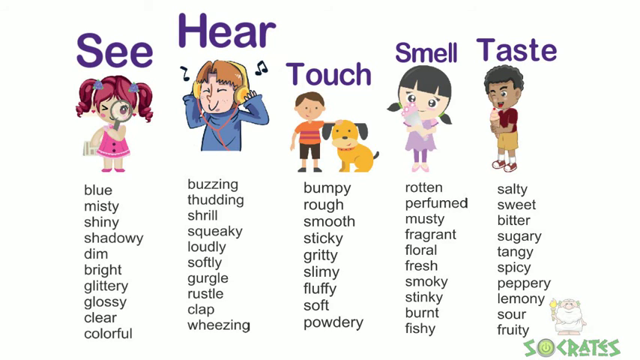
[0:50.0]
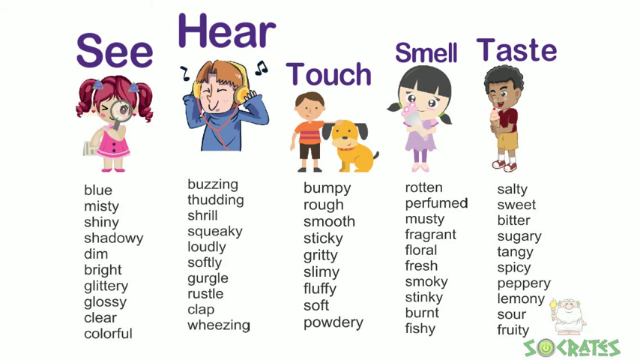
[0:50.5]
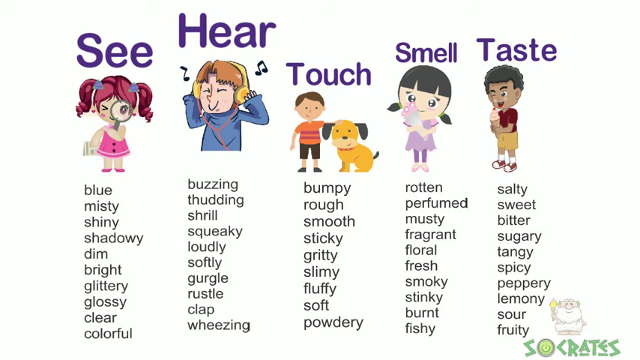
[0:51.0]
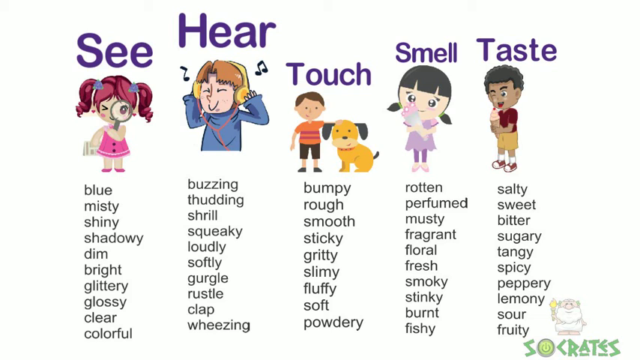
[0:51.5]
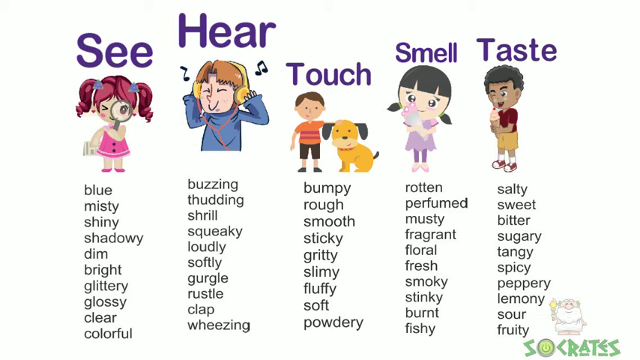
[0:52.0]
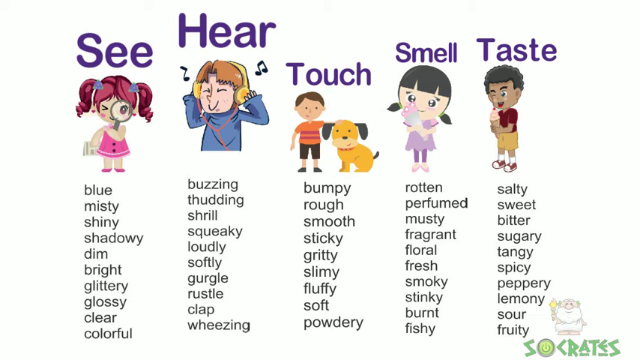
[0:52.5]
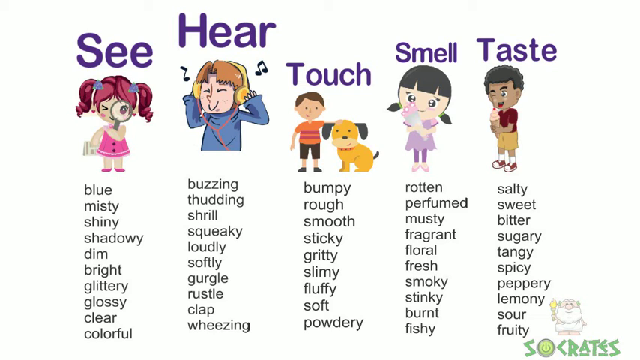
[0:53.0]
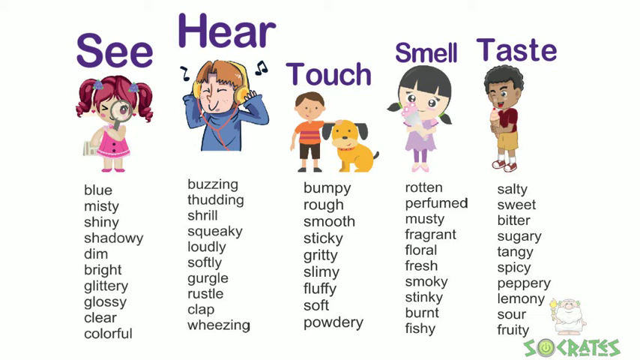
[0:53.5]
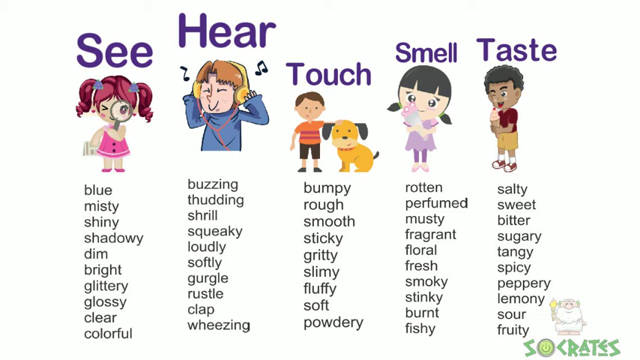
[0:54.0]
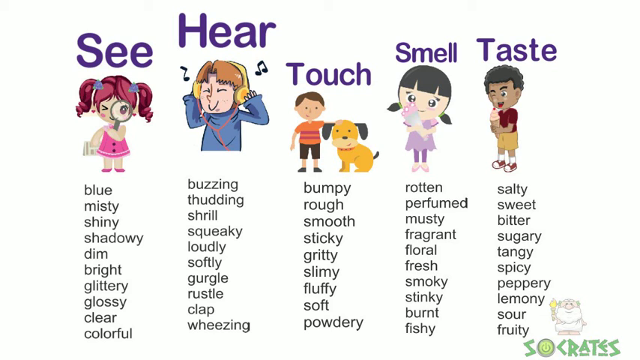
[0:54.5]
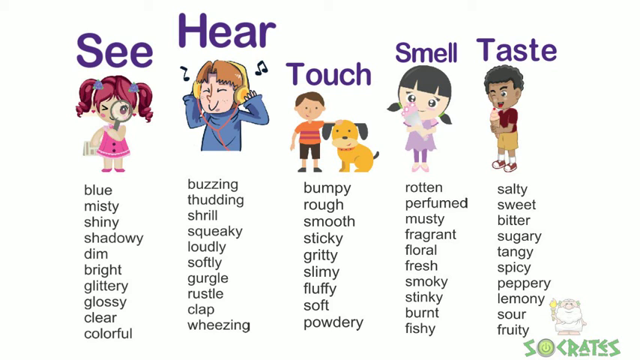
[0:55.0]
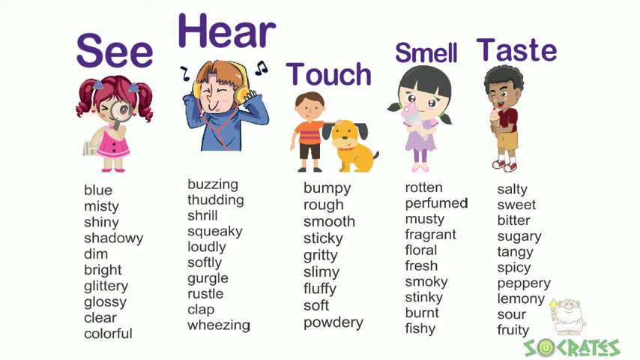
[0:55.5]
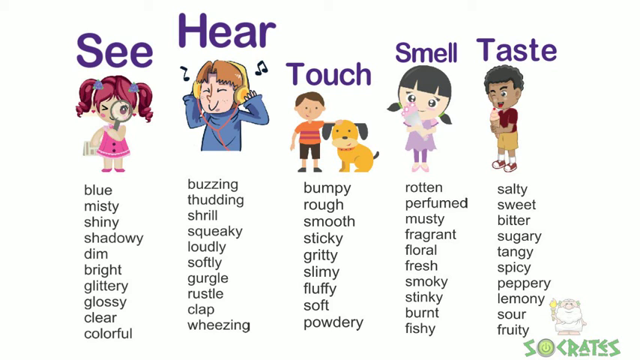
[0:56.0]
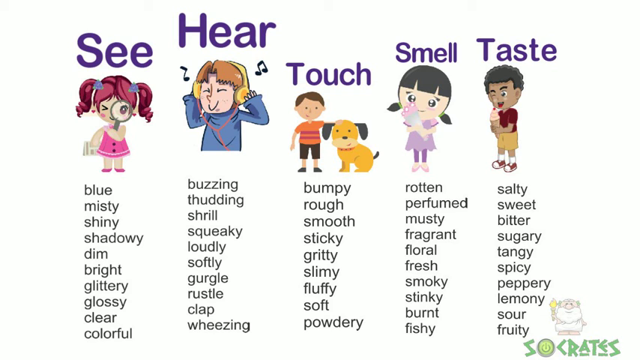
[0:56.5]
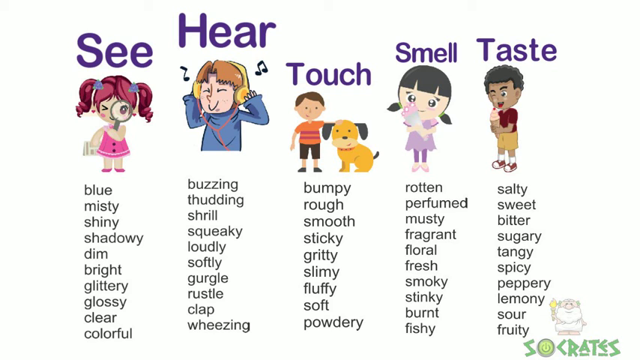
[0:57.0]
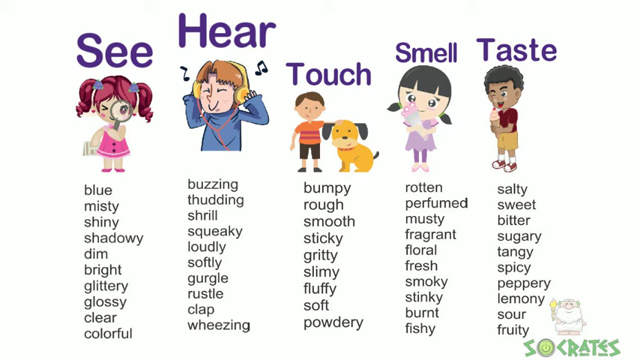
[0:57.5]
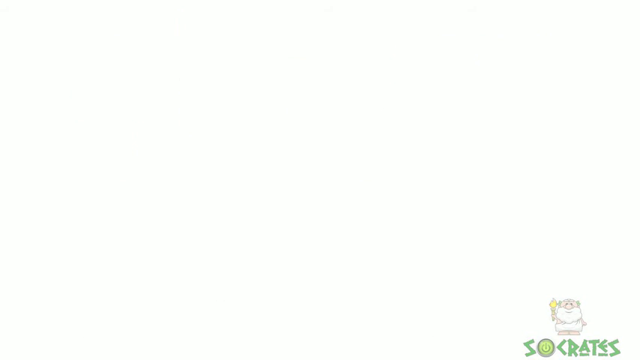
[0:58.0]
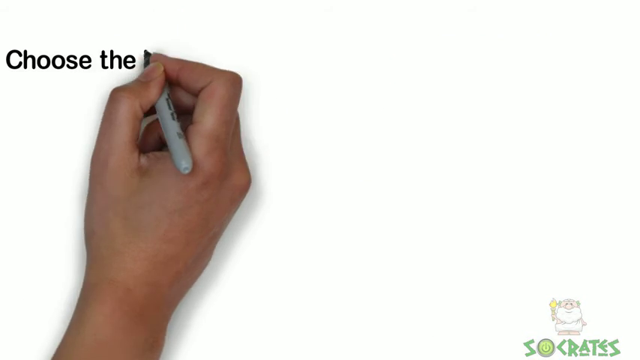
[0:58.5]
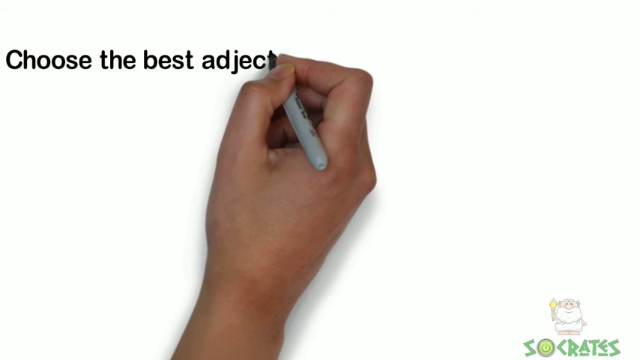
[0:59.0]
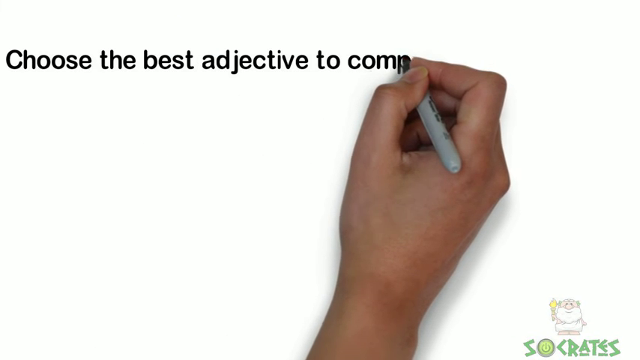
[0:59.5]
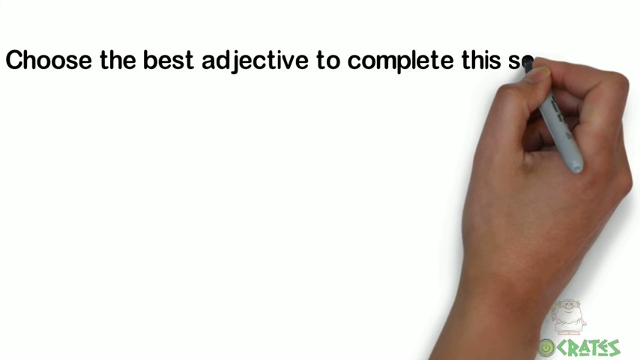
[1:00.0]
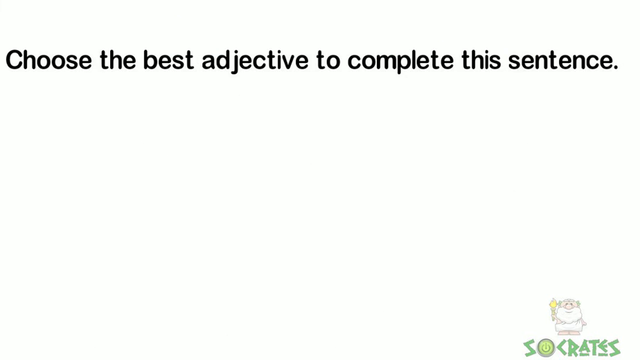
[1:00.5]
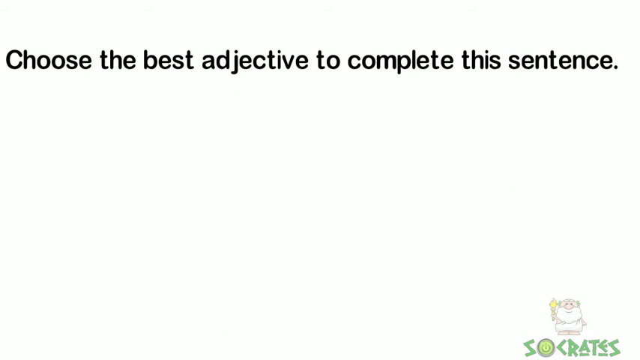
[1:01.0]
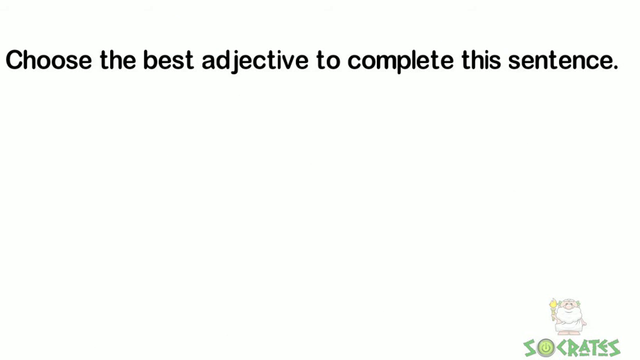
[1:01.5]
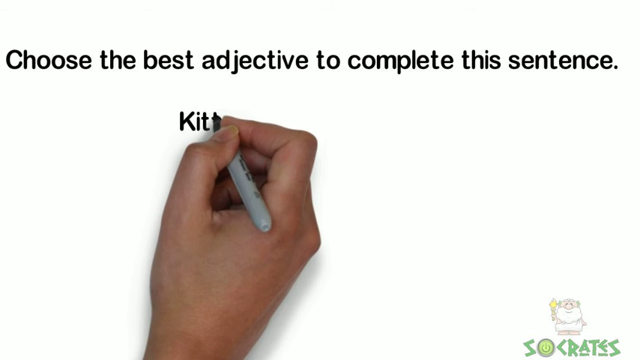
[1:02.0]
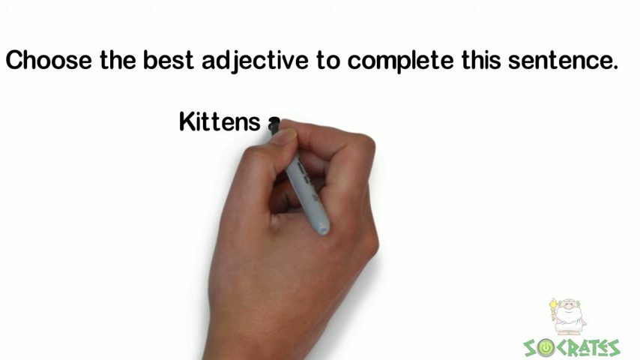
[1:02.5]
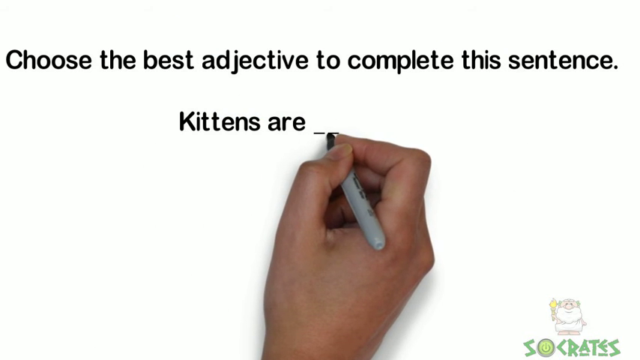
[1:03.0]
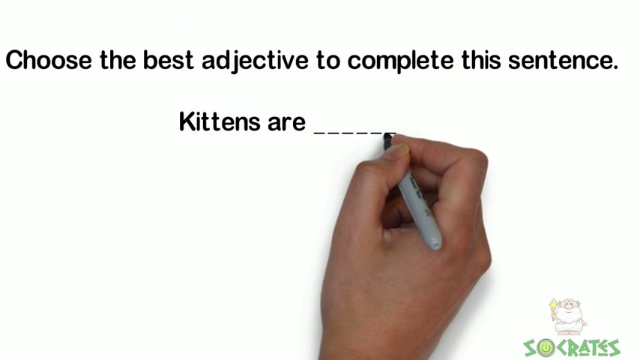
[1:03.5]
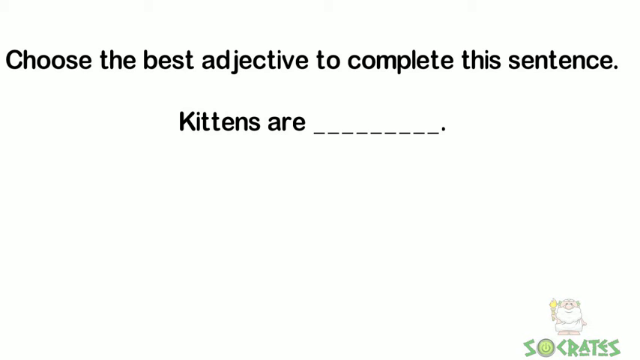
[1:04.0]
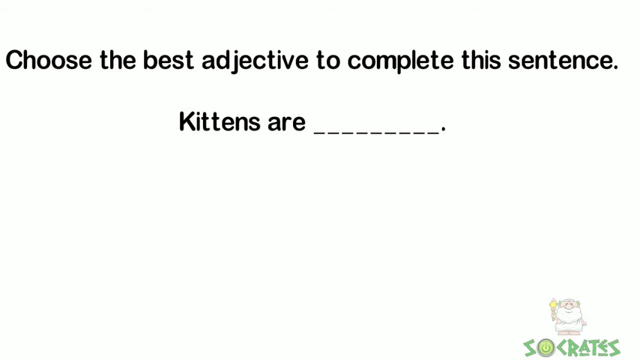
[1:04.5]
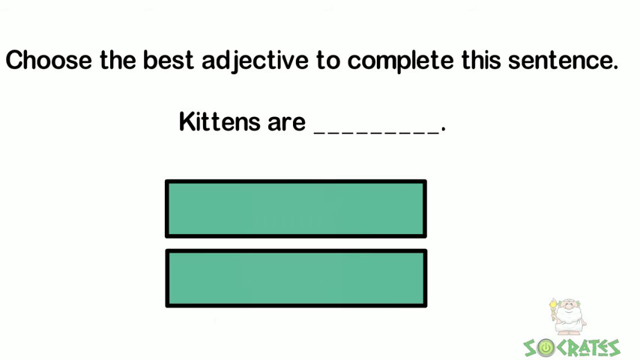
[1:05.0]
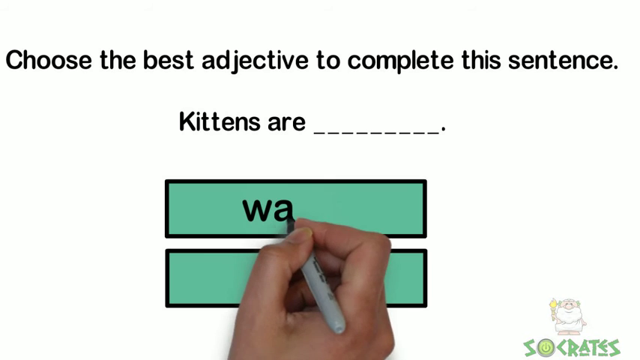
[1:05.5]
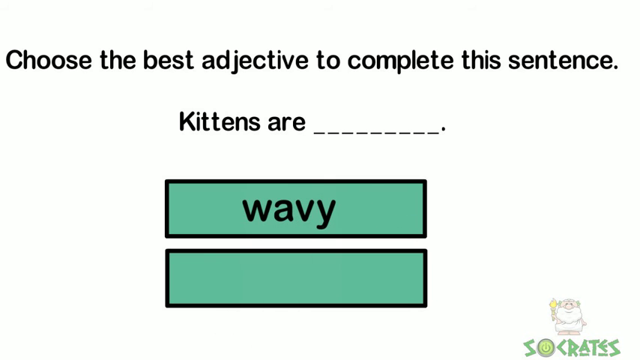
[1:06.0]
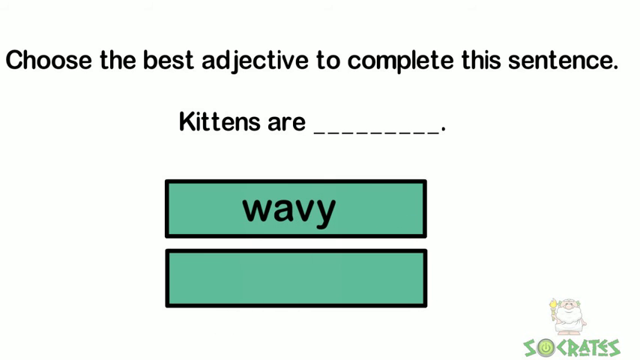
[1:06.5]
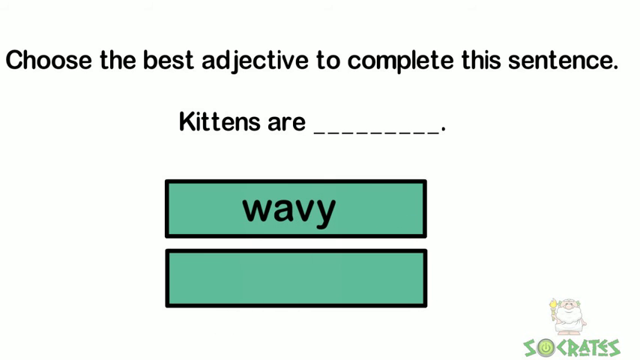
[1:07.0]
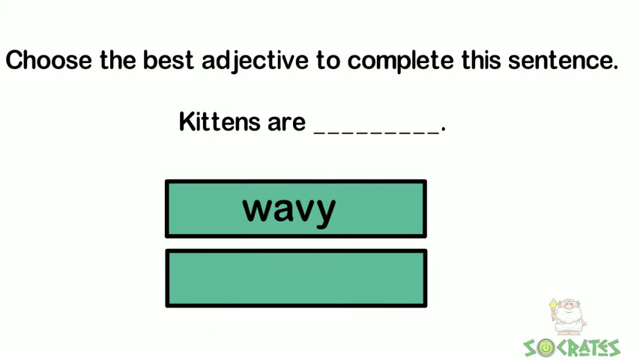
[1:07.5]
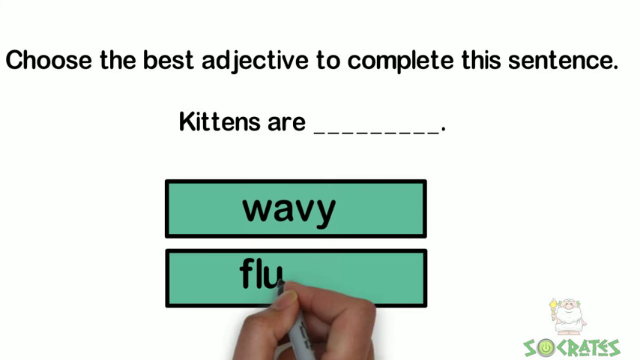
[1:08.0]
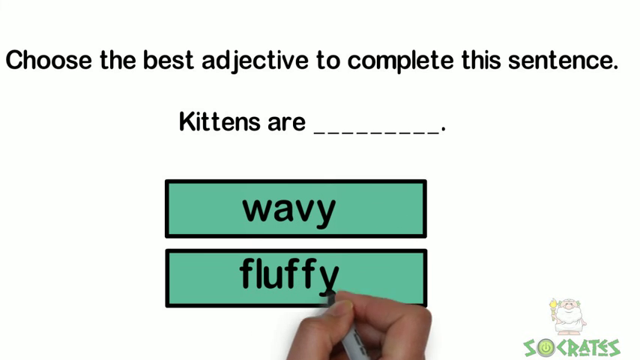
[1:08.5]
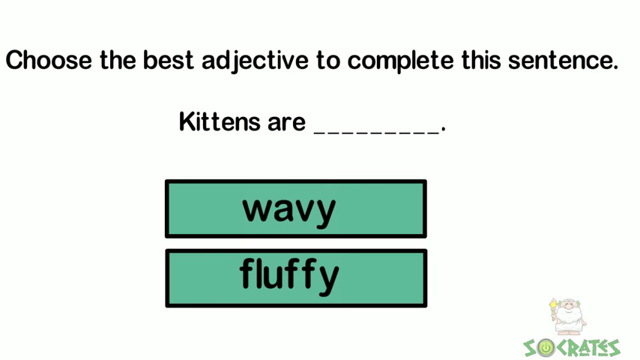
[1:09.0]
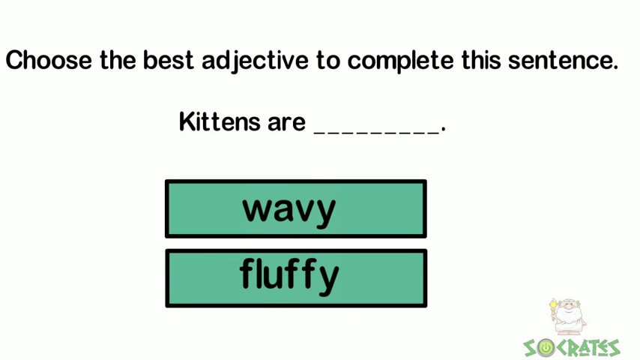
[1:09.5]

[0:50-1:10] There are five categories, each with an image representing it and each named: "see", "hear", "touch", "smell" and "taste". Under "taste" is a boy with black hair wearing a maroon T-shirt, yellow shorts, white socks and maroon and white shoes. Below him, from top, the words read "salty, sweet, bitter, sugary, tangy, spicy, peppery, lemony". The writing continues on the board in black ink: "choose the best adjective to complete this sentence", written from left to right on a white background. Below it is written "kittens are -------". Underneath are two green boxes with black borders; the first reads "wavy" and the second "fluffy".